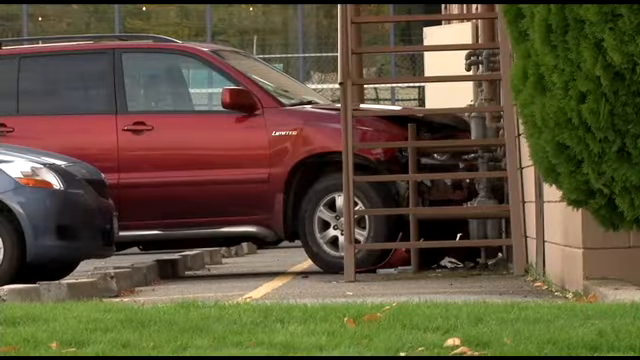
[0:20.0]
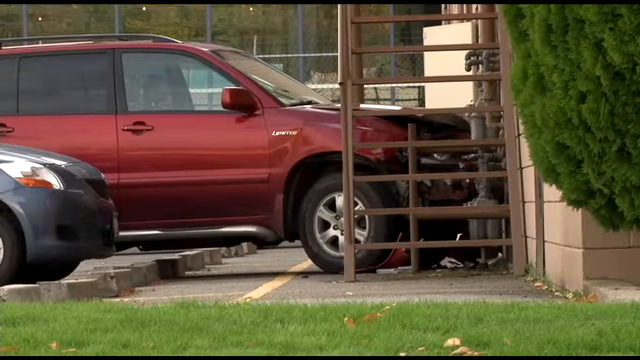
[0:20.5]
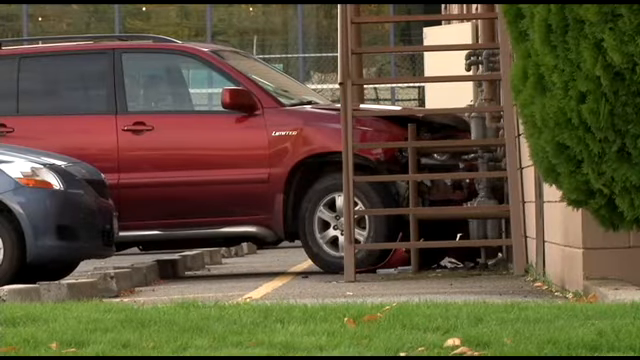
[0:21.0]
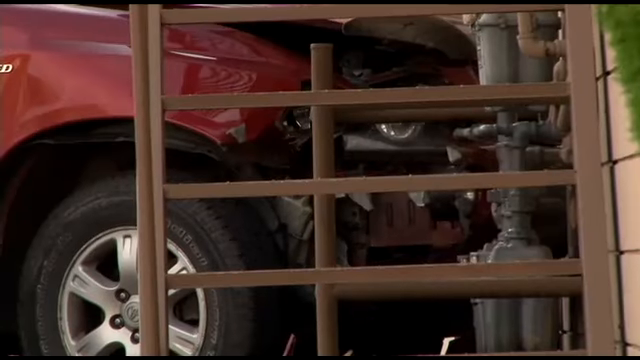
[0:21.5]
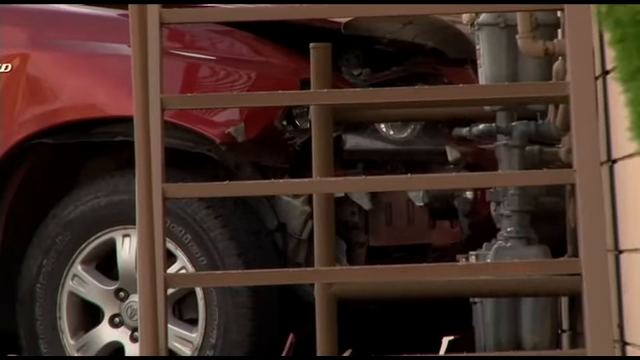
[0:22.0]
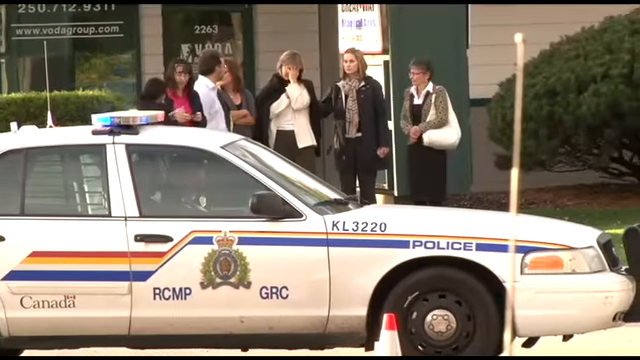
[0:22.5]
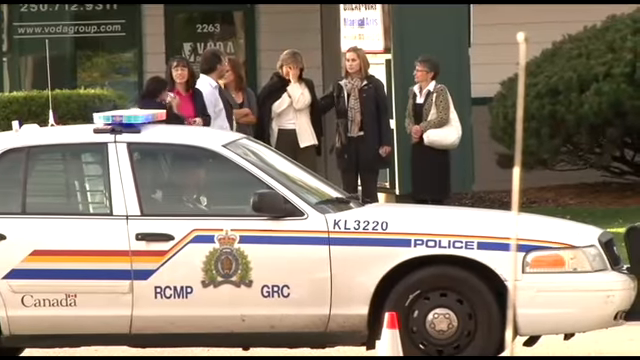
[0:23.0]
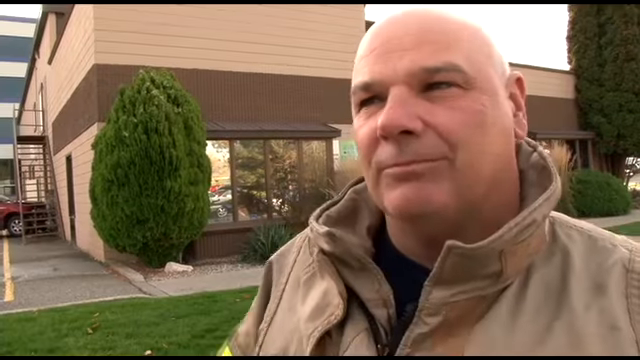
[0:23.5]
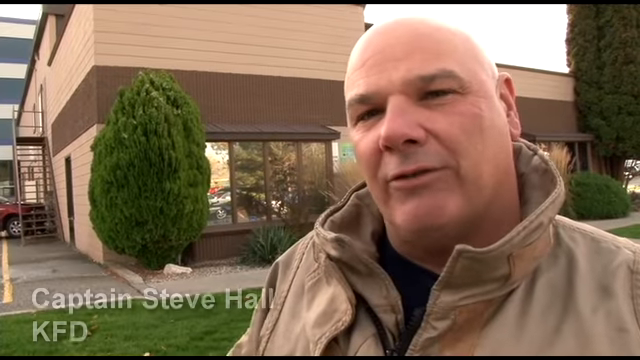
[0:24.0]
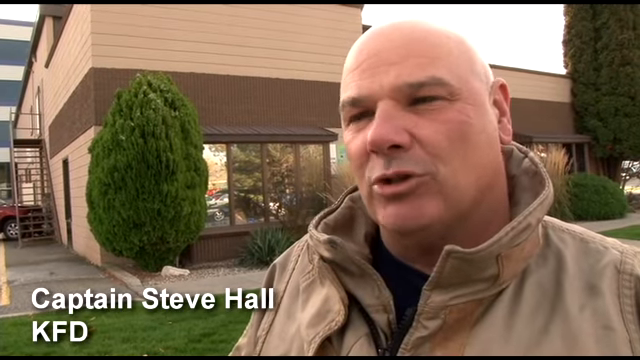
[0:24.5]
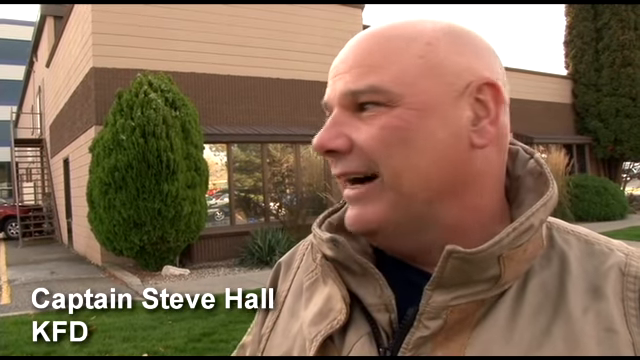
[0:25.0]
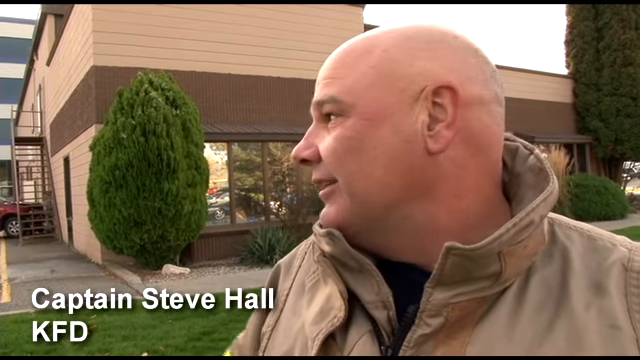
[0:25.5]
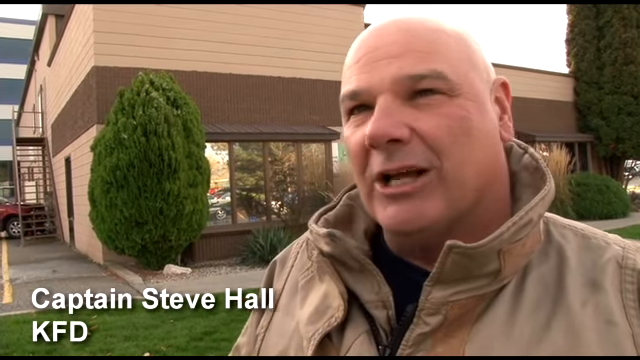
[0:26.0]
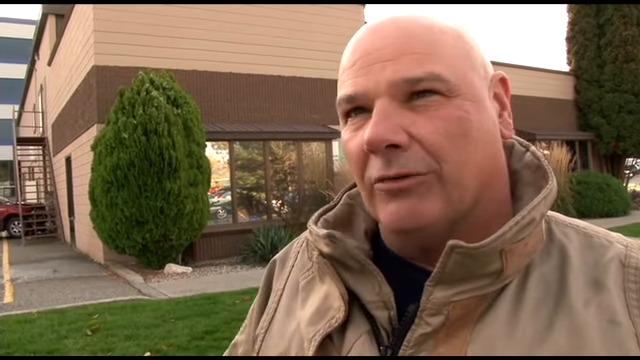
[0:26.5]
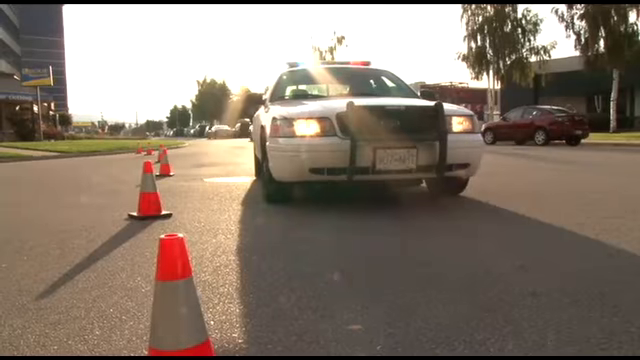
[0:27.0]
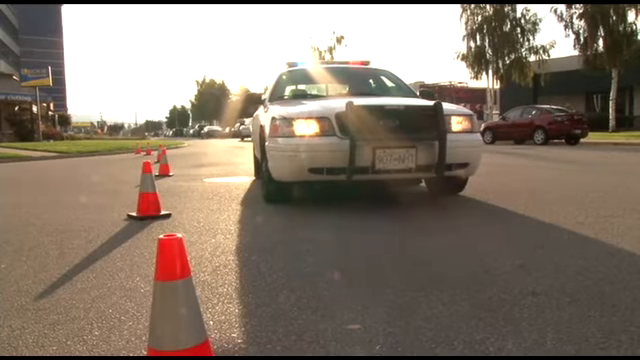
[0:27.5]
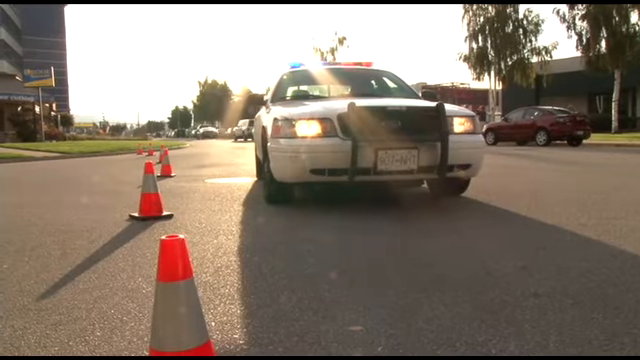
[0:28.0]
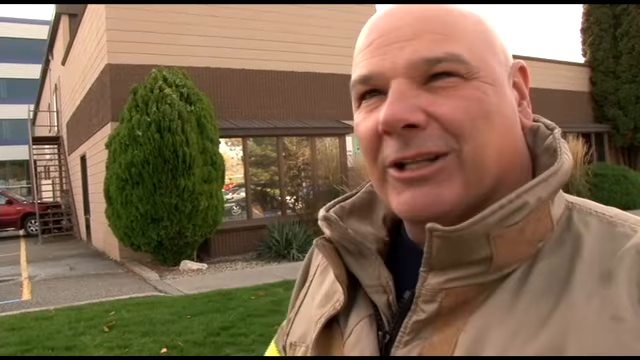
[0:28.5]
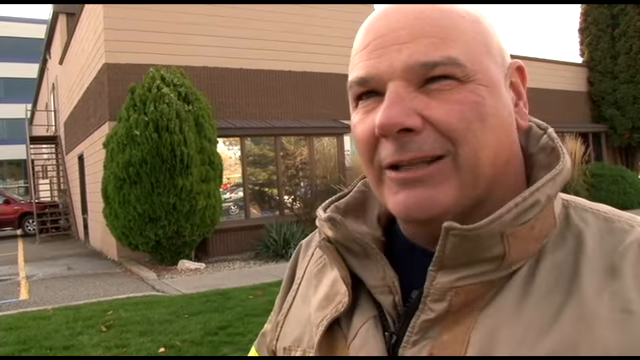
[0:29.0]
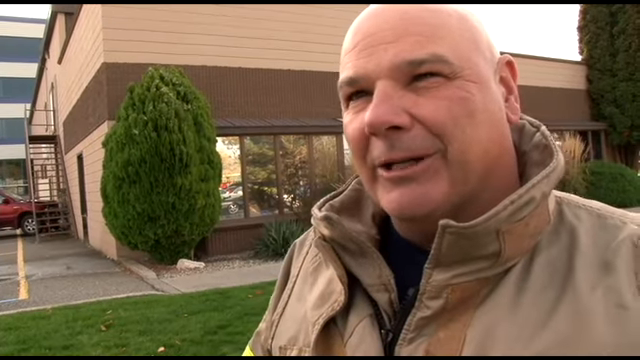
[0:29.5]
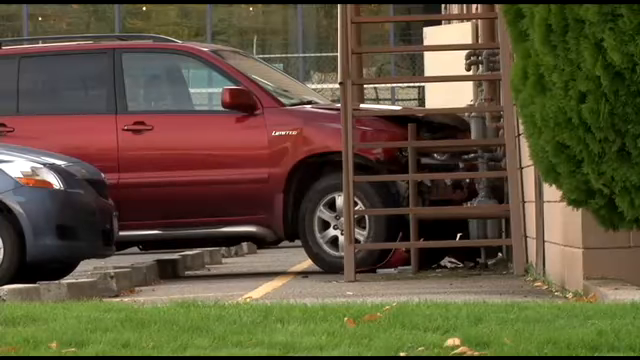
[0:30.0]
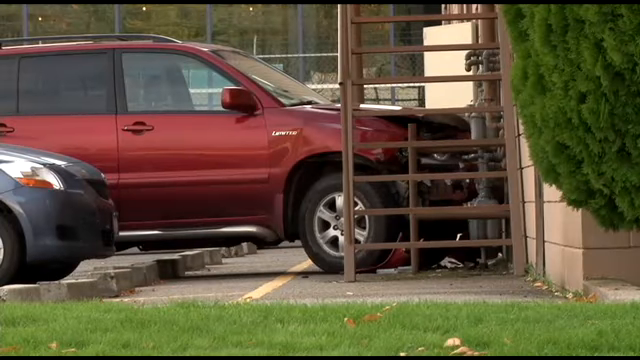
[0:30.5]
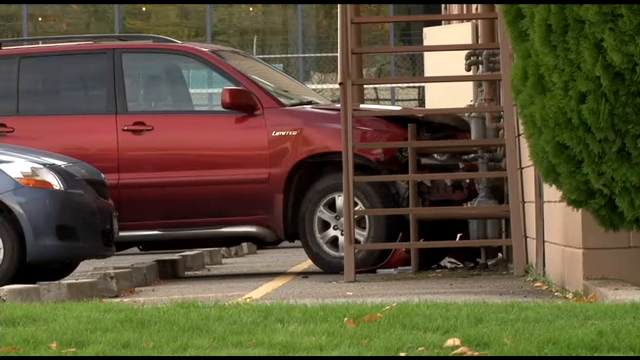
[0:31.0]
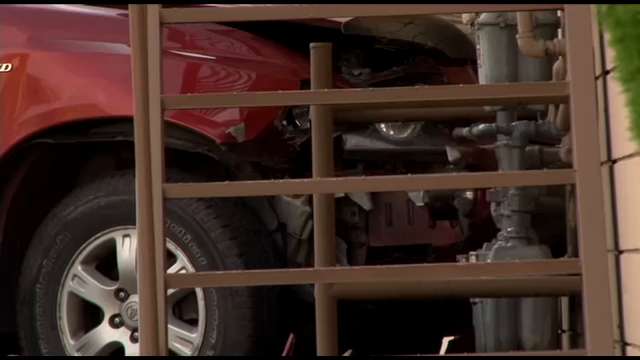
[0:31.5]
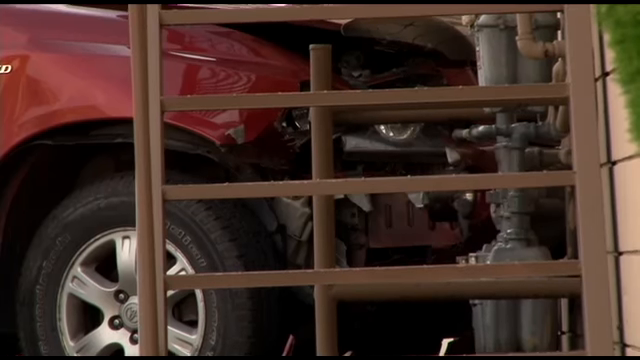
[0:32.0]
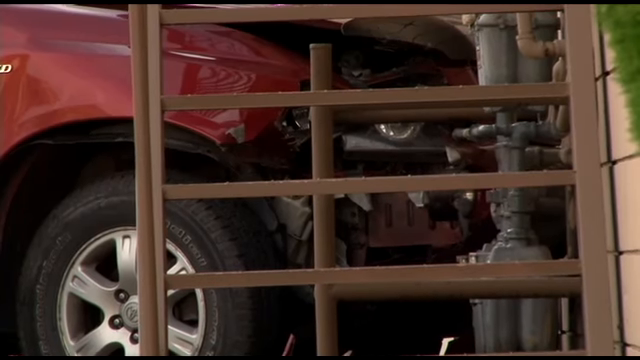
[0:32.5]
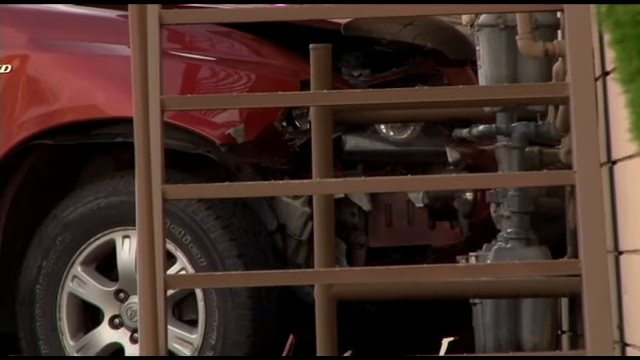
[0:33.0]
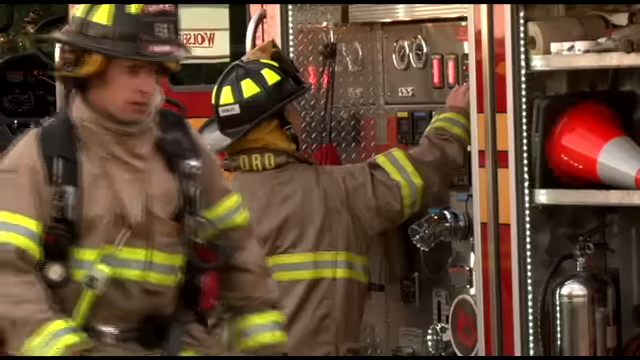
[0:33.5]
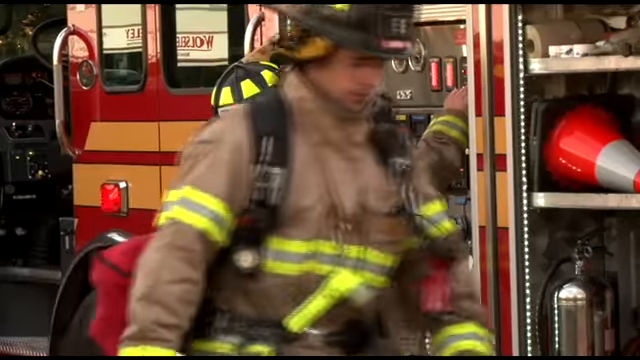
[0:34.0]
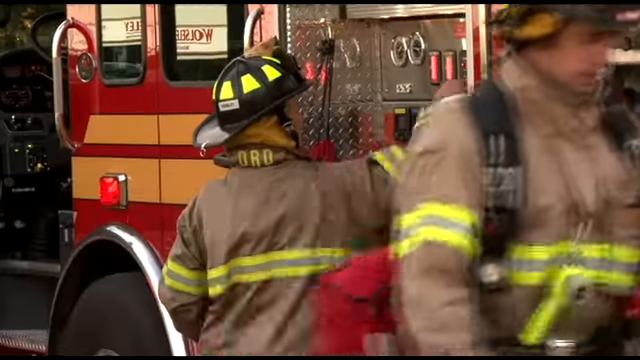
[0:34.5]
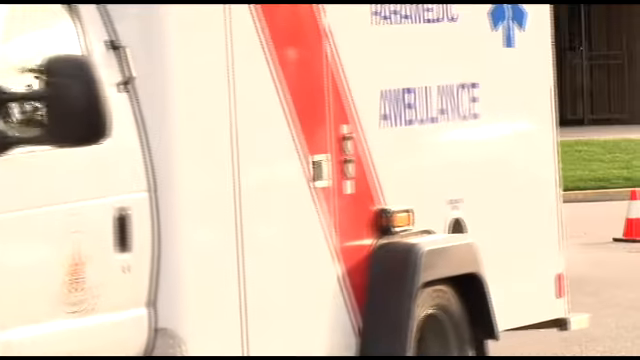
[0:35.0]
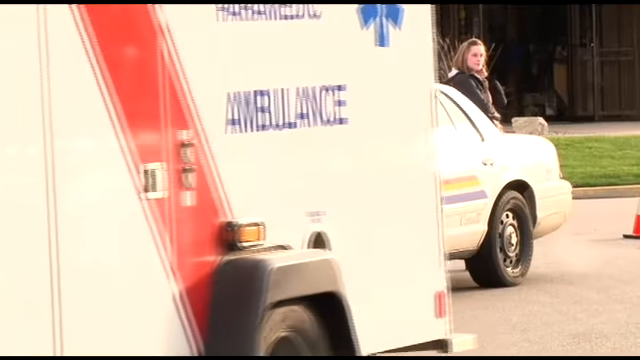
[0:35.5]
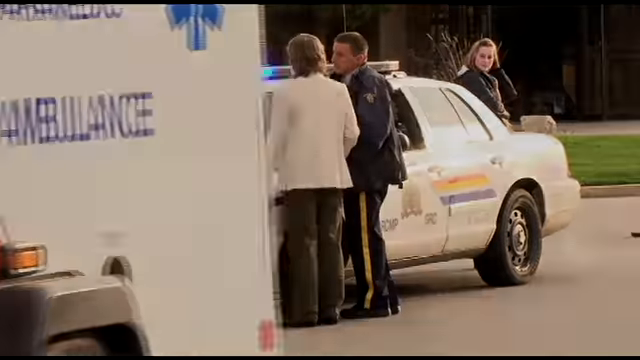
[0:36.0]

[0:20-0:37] In a different scene, apparently outside a police station, a group of women stand outside with a police car in front of them; one of them looks visibly upset. Next, a bald man in his 50s, Captain Steve Hall from KED, talks outside what looks like a police station. During the short interview he looks to his left, showing his side profile, and then looks back at the camera. The video cuts to a road with emergency cones on the side and a police car parked next to the cones. It returns to the captain outside the police station, then shows a close-up of the police station's parking lot with a parked red Tahoe and an outside staircase. The Tahoe looks like it hit the side of the police station, as its hood and bumper are completely smashed in. The next scene shows firefighters in full gear, one of them putting something on a fire truck. In the last scene an ambulance passes by, revealing a police car parked on the side with two officers around it, one of them talking to an investigator.